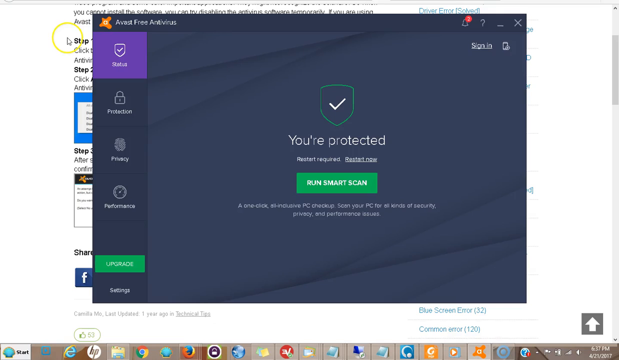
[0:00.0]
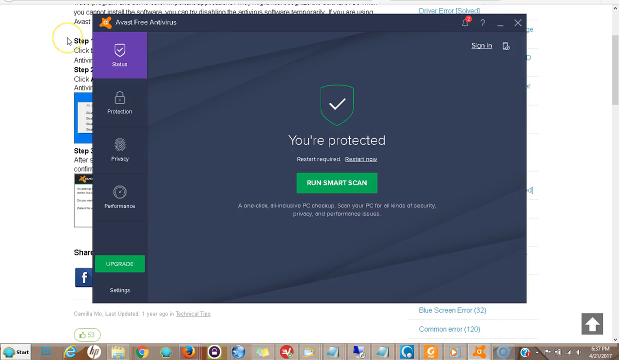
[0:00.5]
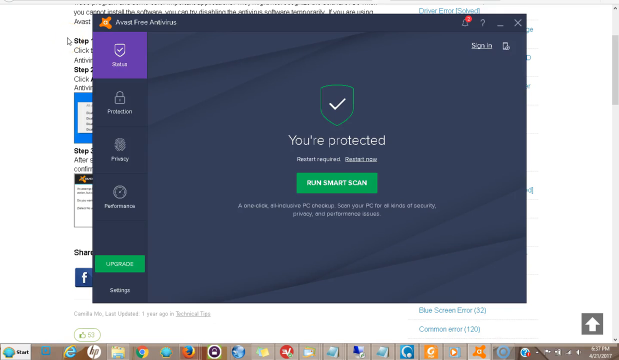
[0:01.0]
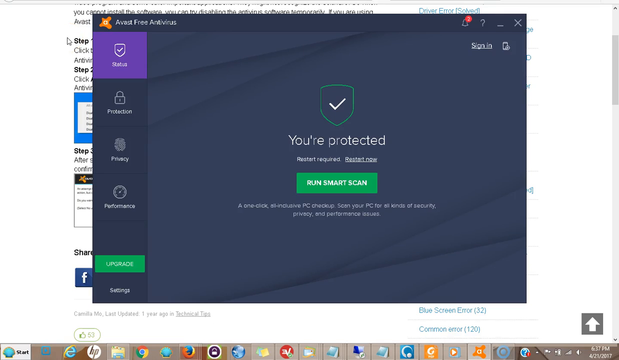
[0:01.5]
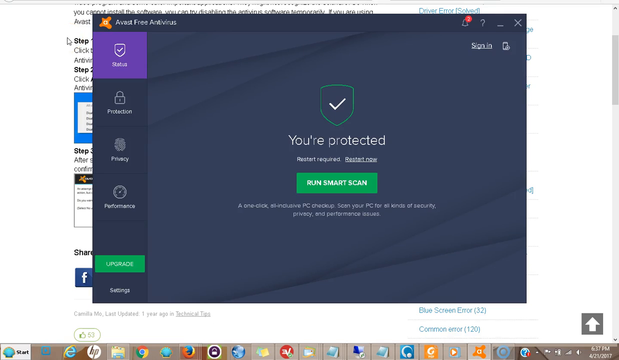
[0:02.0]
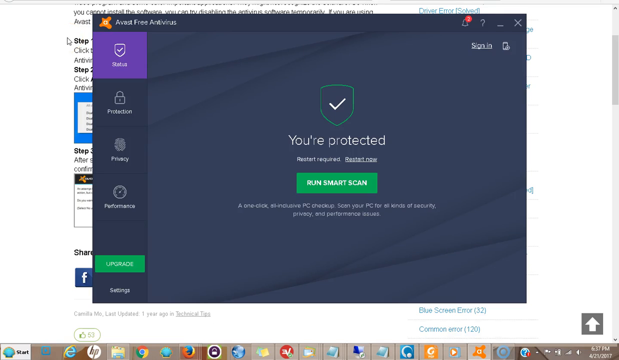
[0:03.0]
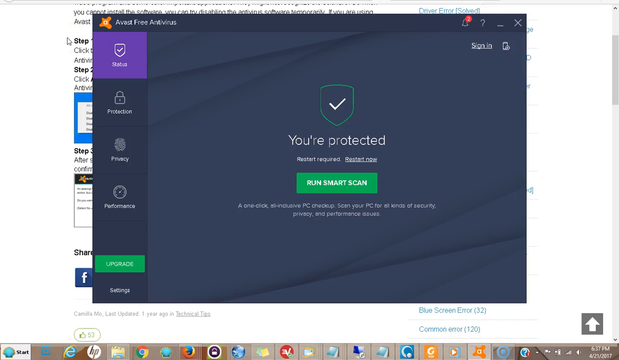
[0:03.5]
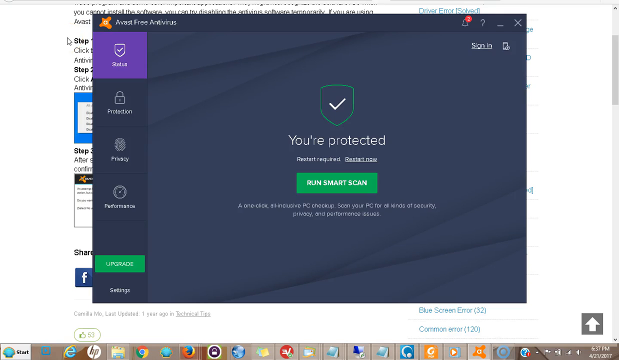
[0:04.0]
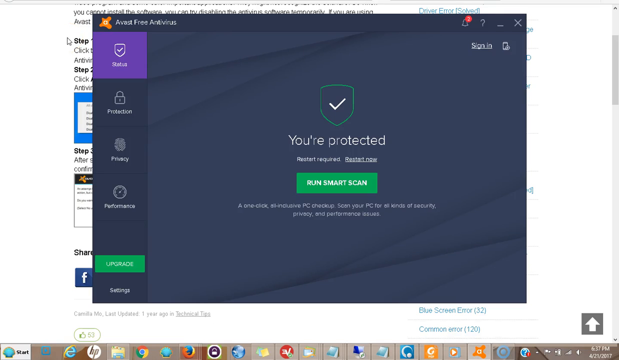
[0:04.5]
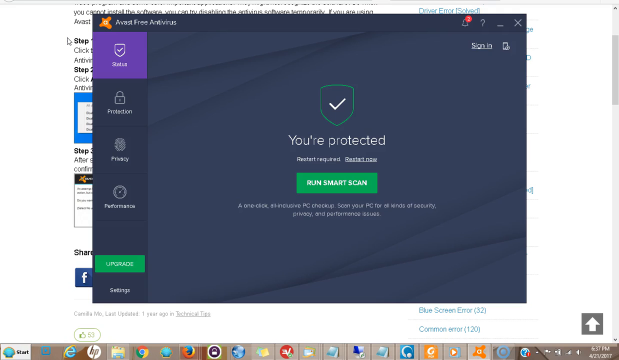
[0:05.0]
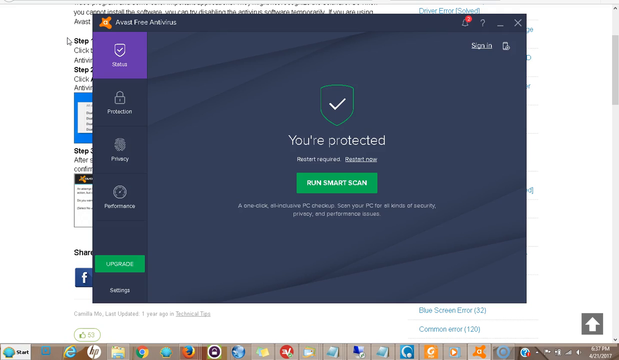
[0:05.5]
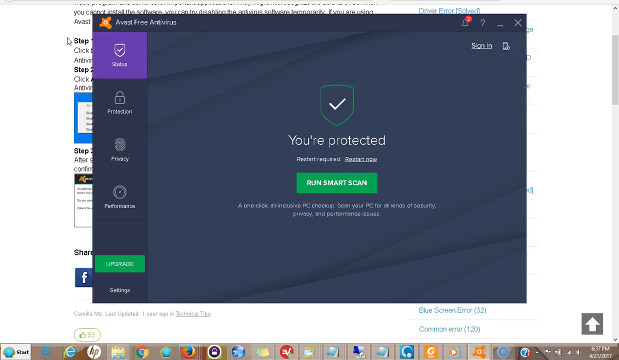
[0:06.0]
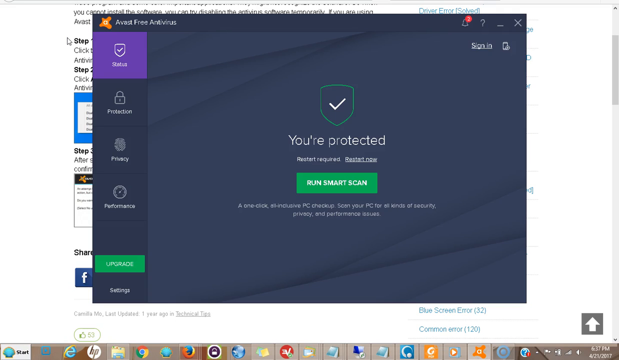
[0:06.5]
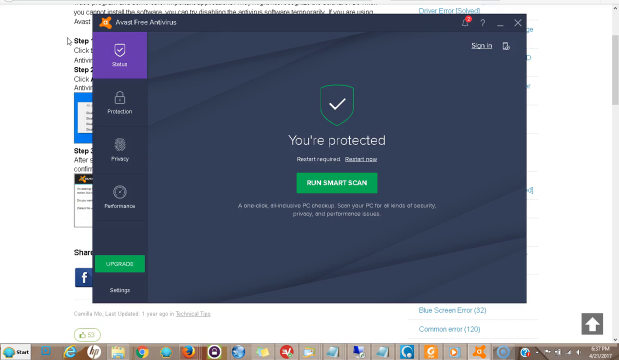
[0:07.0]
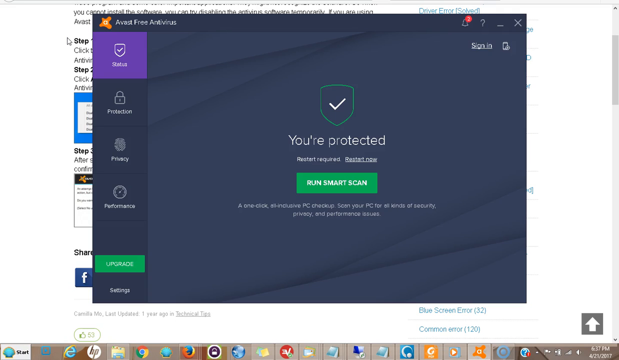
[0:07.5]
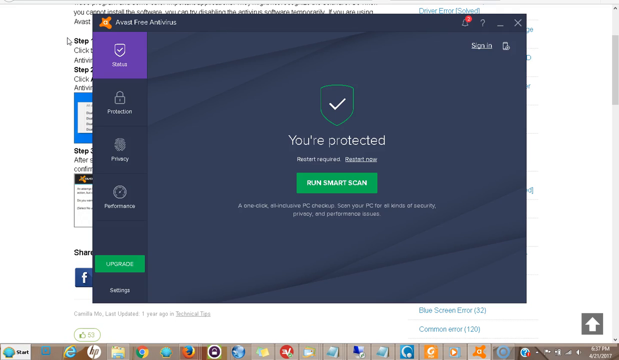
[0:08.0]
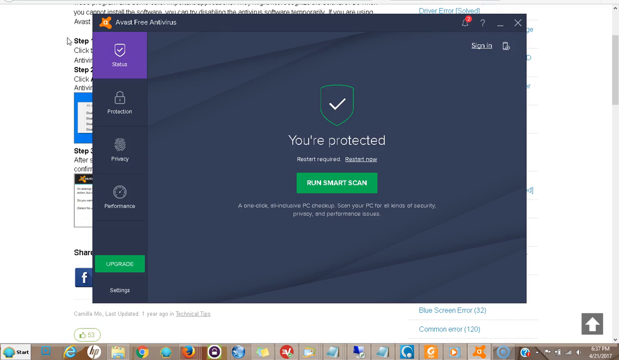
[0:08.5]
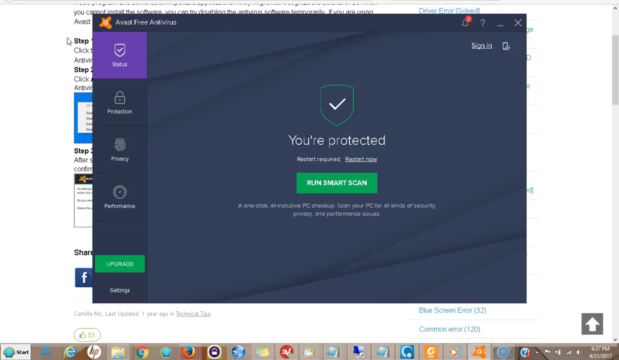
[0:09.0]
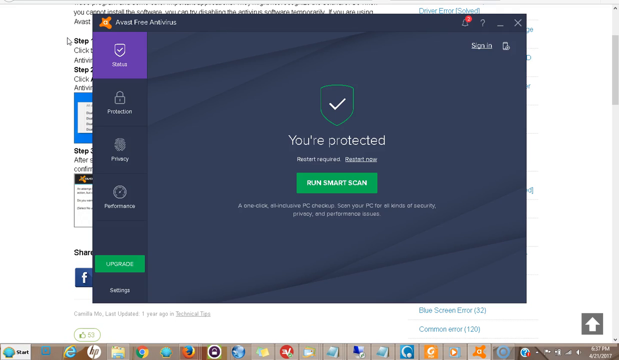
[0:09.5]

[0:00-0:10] The user's screen seems to show Avast free antivirus, open as a pop-up in the middle. It has four tabs on the left: the first is status, with a checkmark shield icon; the second is protection, with a key lock; the third is privacy; and the fourth is performance. The privacy icon looks sort of like a network, and the performance icon is like a wheel, almost a speedometer. Below the tabs are "upgrade" and then "settings." In the center of the pop-up the text reads "you're protected. Restart required. Restart now." Below that is a big green button that says "run smart scan," and below it the text "a one-click all-inclusive PC checkup. Scan your PC now for all kinds of security, privacy, and performance issues."